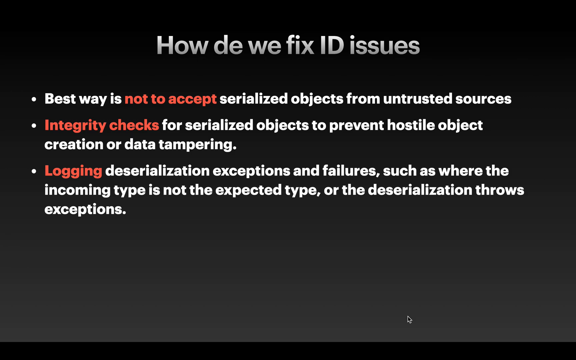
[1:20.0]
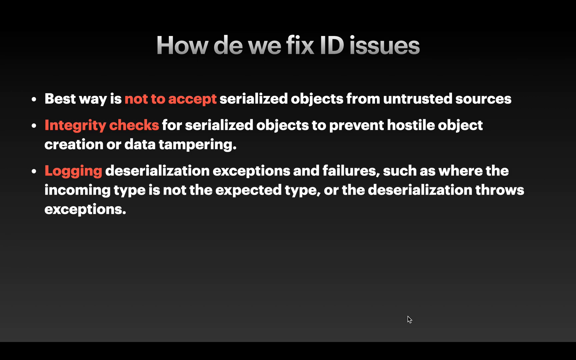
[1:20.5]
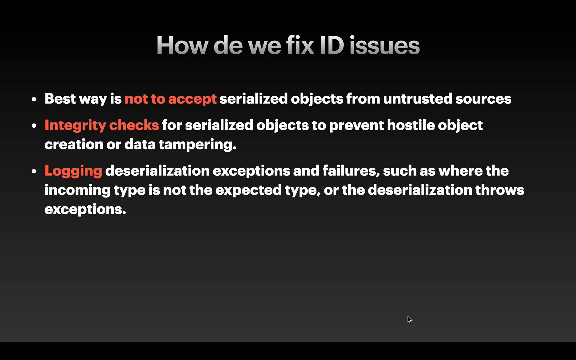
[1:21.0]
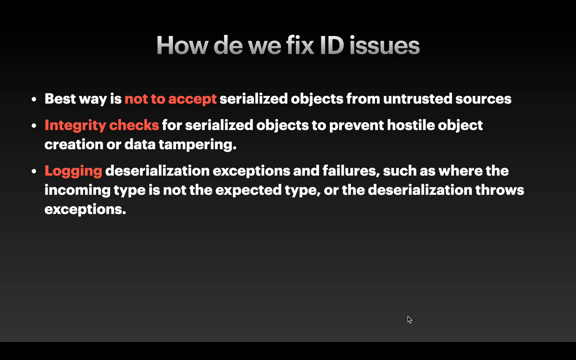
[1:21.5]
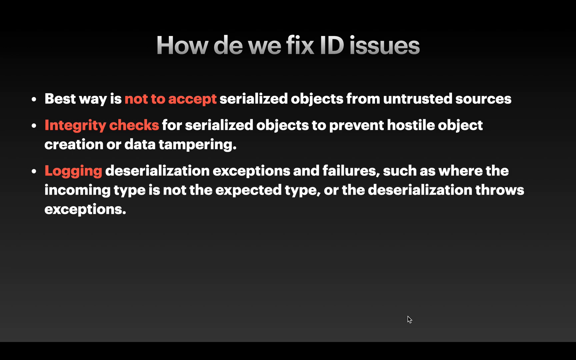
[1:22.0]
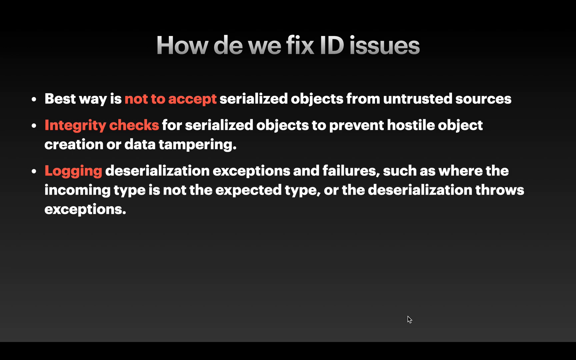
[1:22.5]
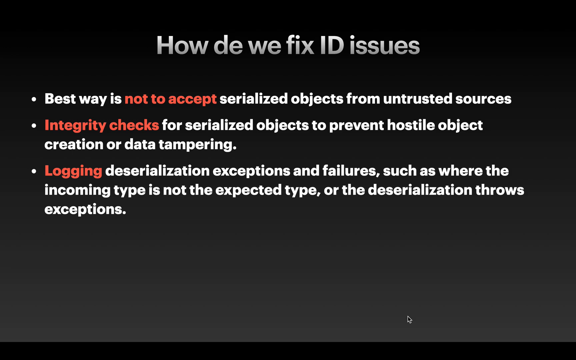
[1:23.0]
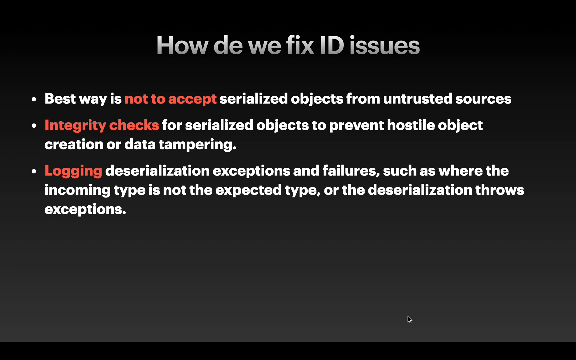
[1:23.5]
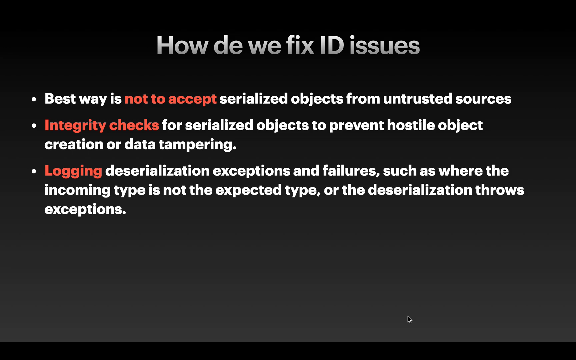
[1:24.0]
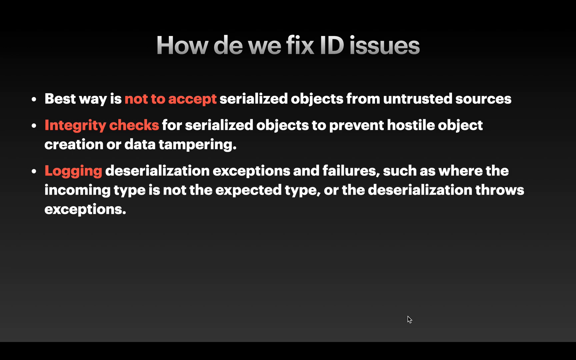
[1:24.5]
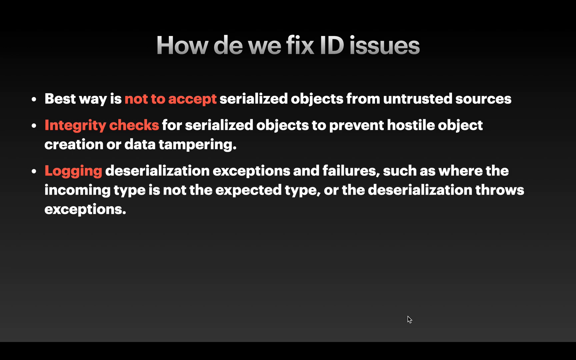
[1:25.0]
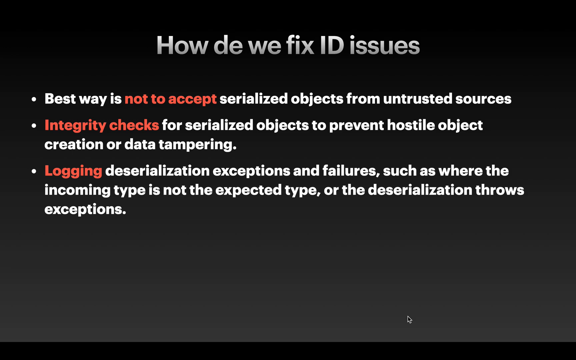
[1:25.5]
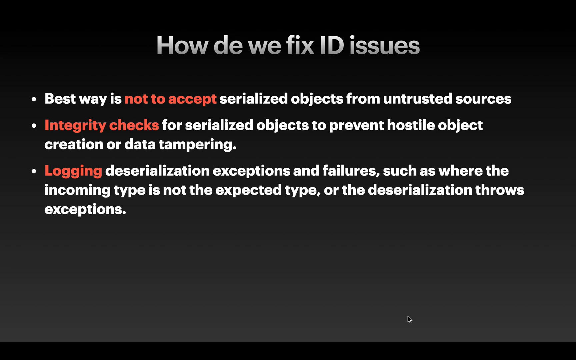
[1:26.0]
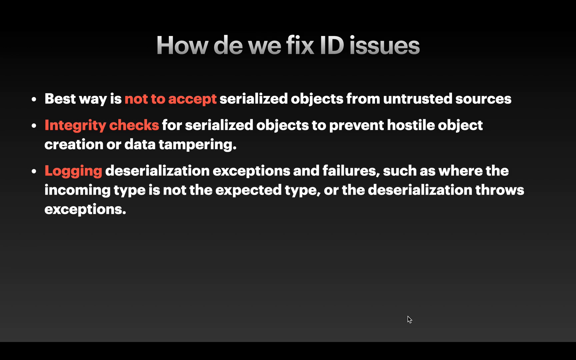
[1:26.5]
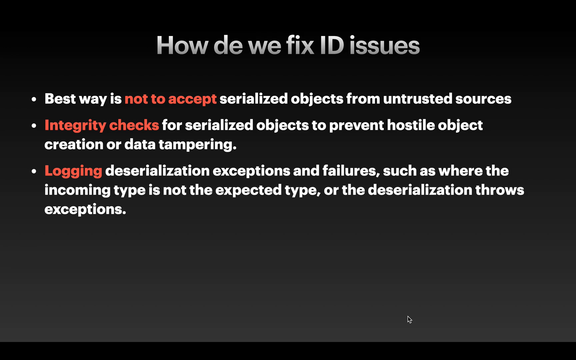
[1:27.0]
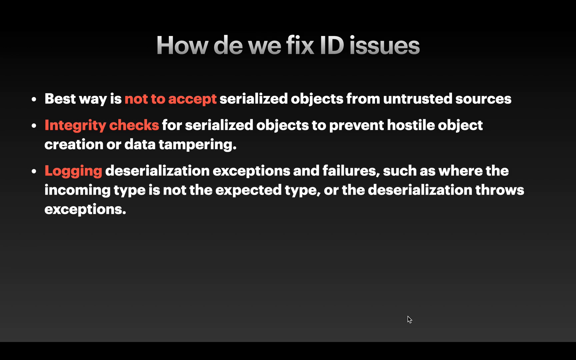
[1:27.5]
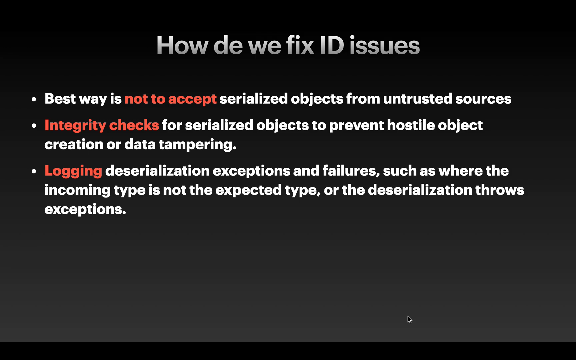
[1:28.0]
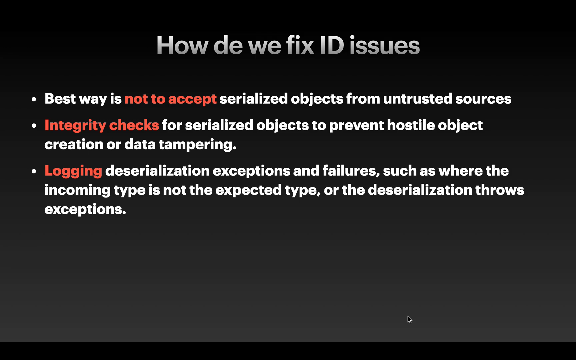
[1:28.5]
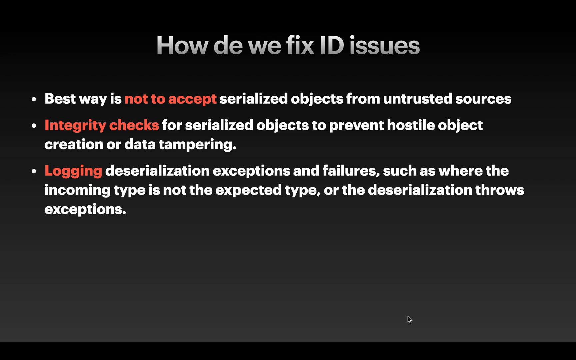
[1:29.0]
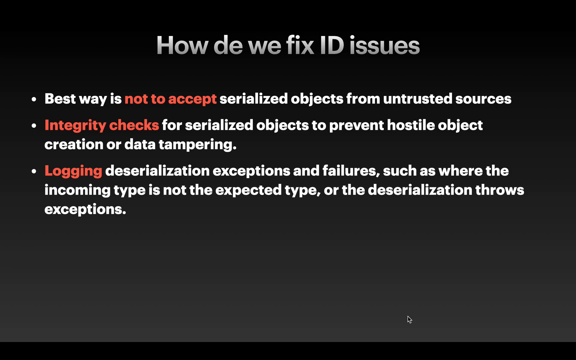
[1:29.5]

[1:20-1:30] The slide titled "how do we fix ID issues" remains. The best way suggested is to not accept serialized objects from untrusted sources, and two other options are listed: integrity checks for serialized objects to prevent hostile object creation or data tampering, and logging deserialization exceptions and failures, such as where the incoming type is not the expected type. Some words are highlighted in red: "not to accept" in the first tip, "integrity checks" in the second, and "logging" in the third. It seems to be a tutorial on avoiding or fixing ID issues.